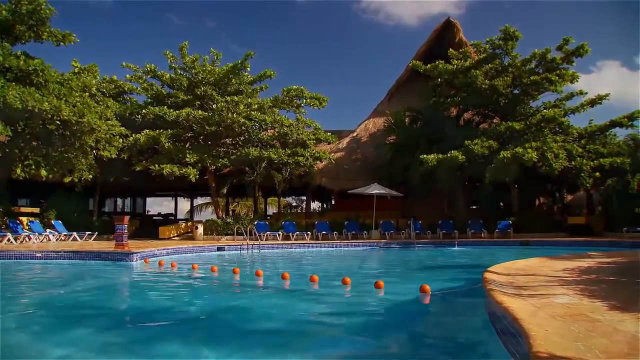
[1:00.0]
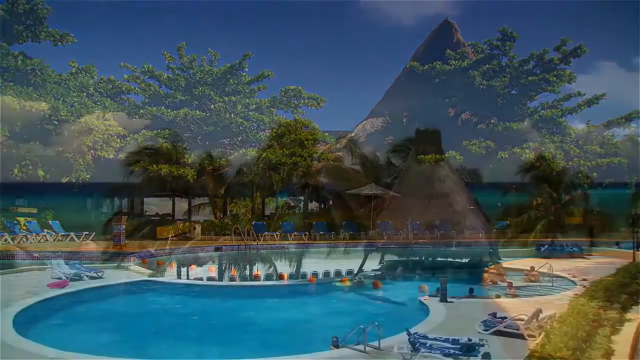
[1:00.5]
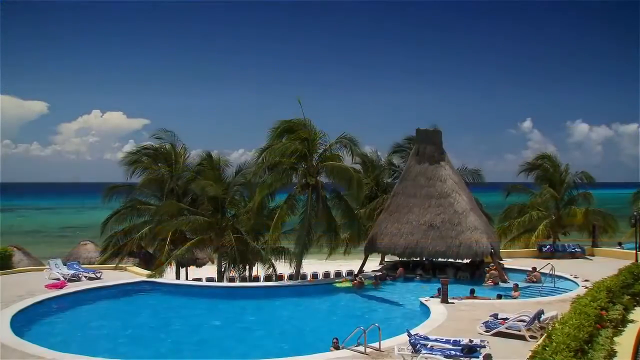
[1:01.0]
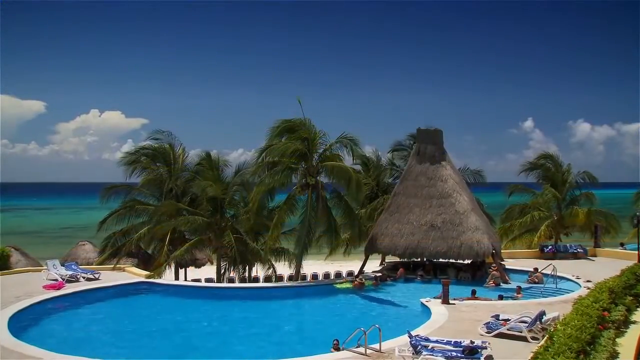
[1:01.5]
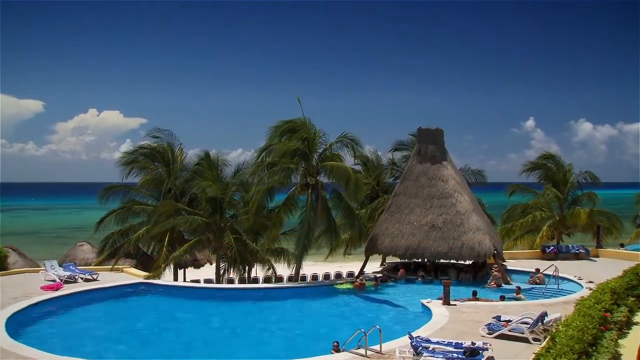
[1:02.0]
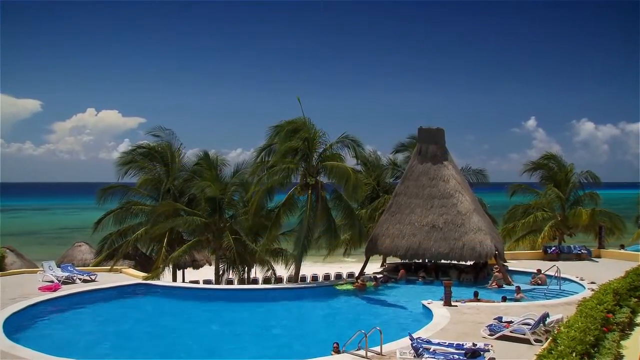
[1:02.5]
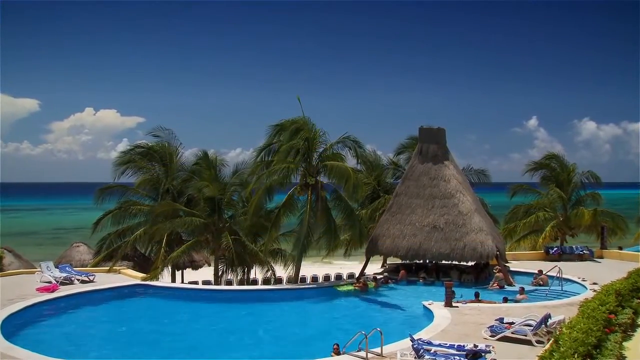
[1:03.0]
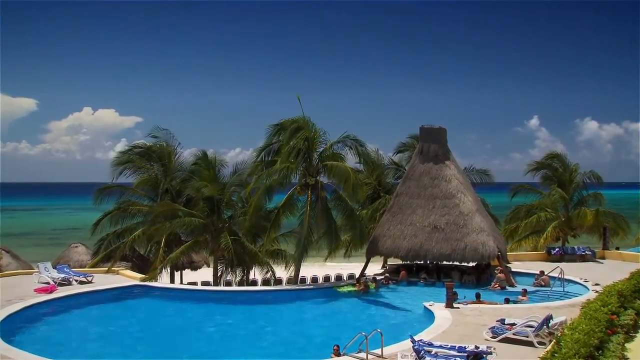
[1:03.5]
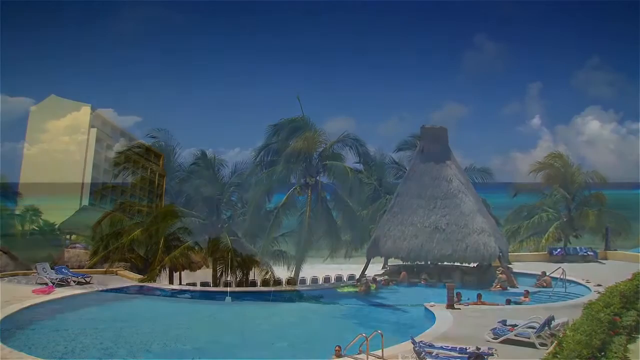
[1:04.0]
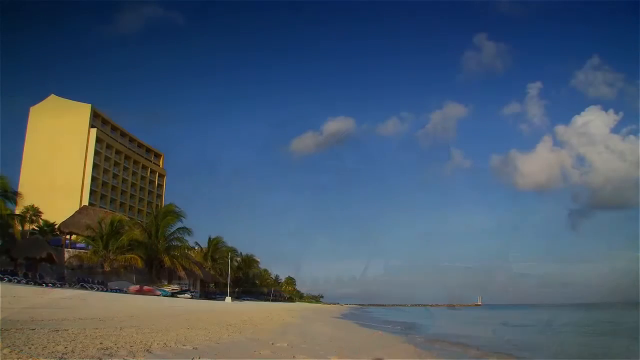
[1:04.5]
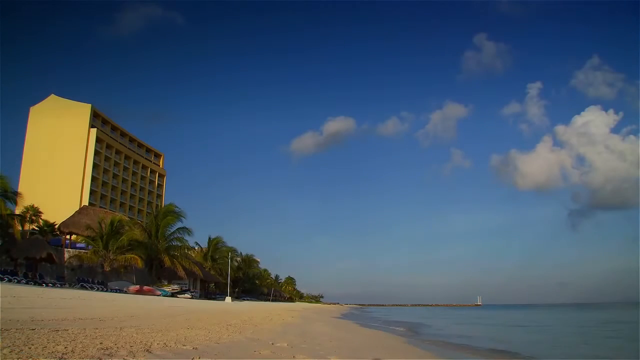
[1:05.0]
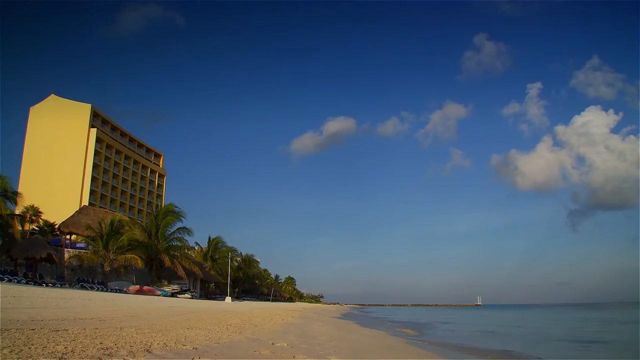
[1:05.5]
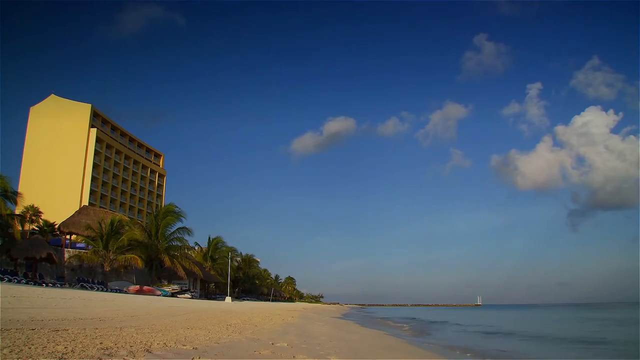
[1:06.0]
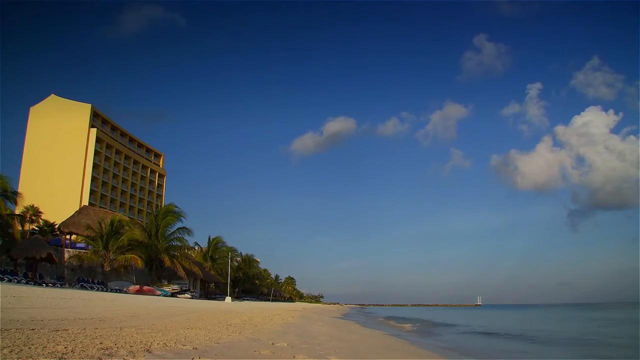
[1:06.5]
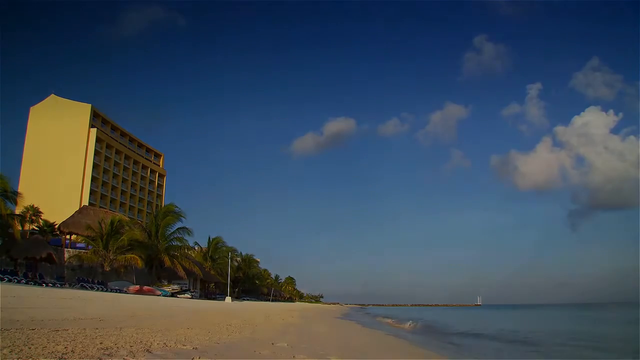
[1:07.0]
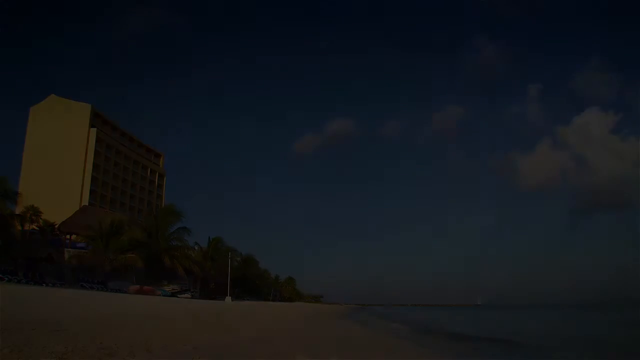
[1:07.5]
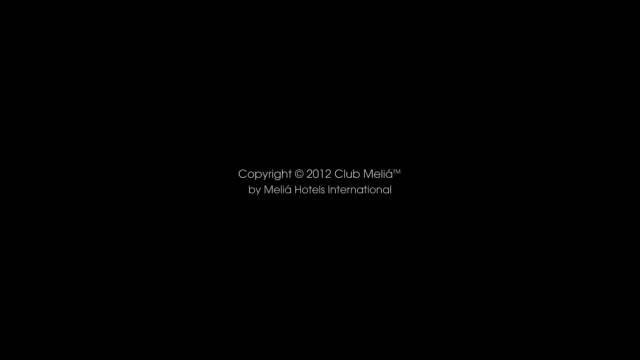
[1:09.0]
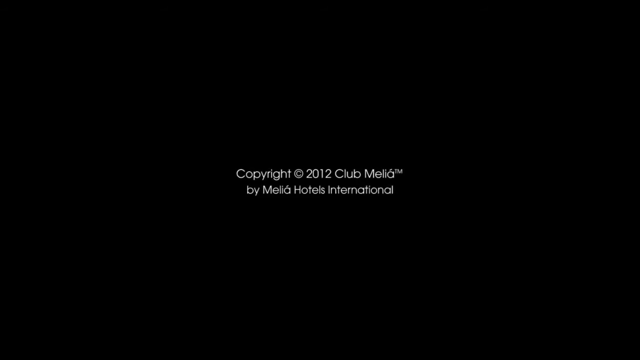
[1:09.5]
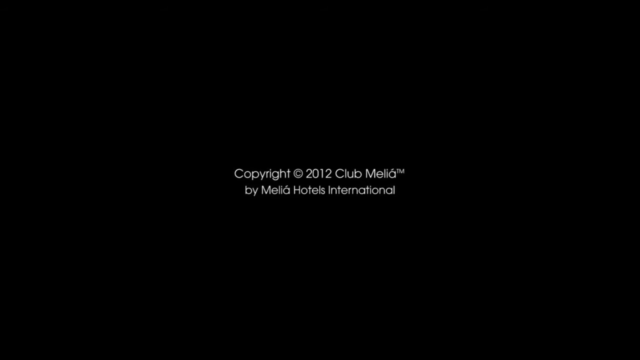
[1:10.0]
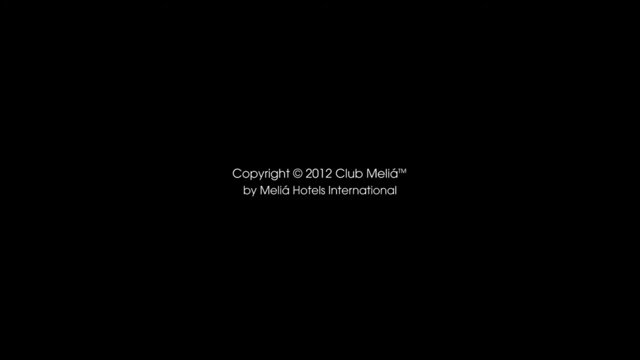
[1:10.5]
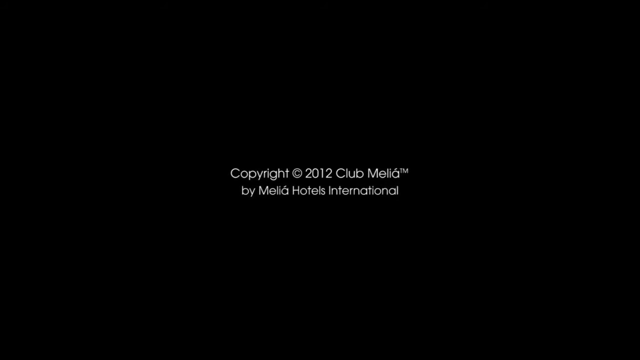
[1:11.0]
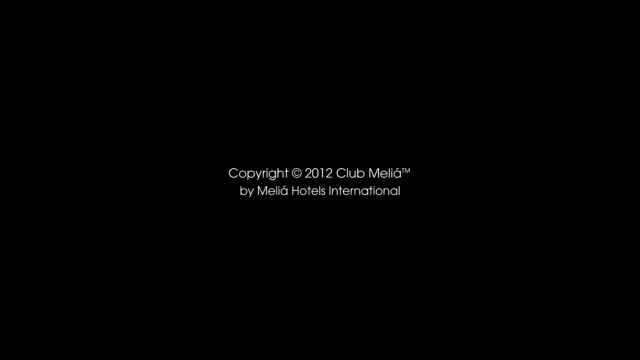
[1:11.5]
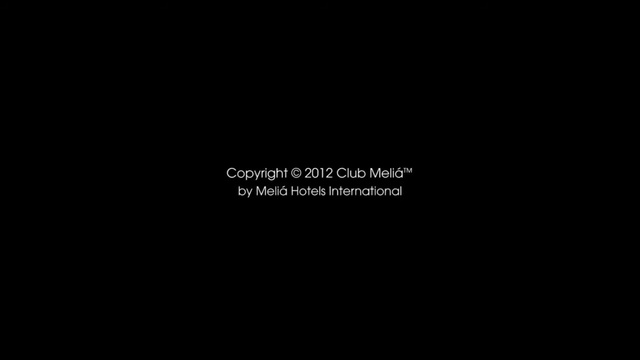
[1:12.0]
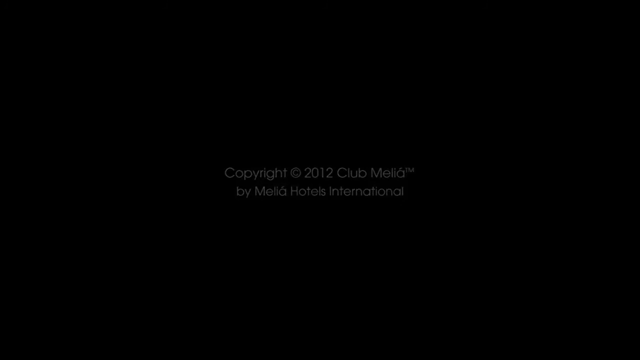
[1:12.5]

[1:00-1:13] A wide view shows the poolside area, with a couple of people in the water of the pool and a couple of palm trees around it; farther in the distance is the beach. Then an outside view shows the yellow hotel resort building. The video ends with a black screen bearing white words in the middle: "Copyright 2012 Club Malia by Malia Hotels International".